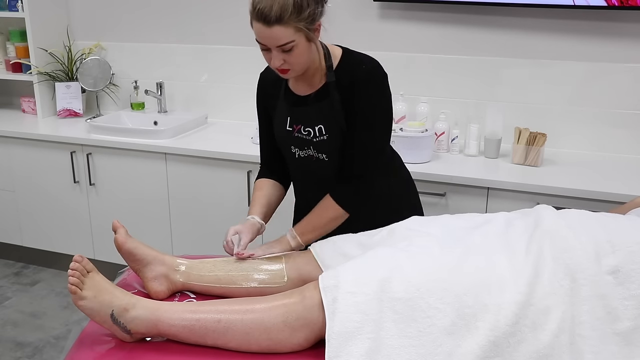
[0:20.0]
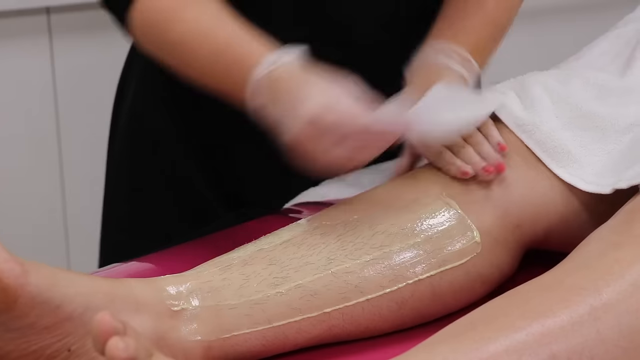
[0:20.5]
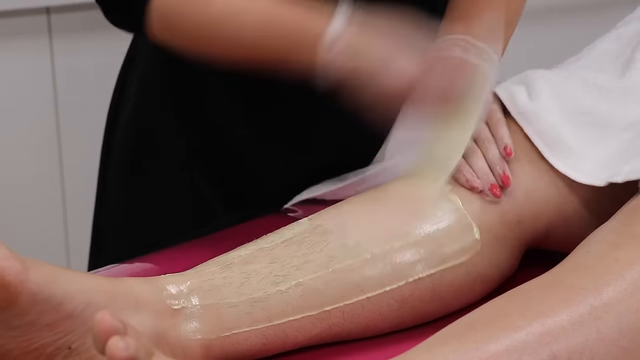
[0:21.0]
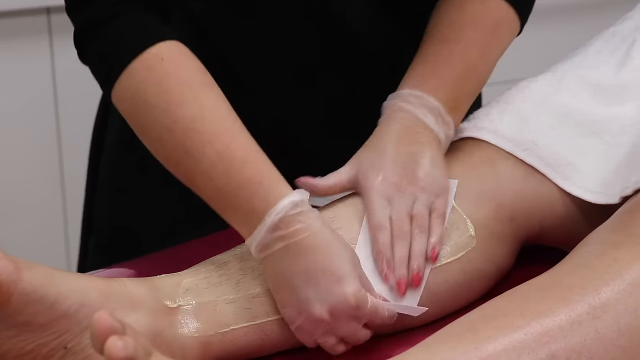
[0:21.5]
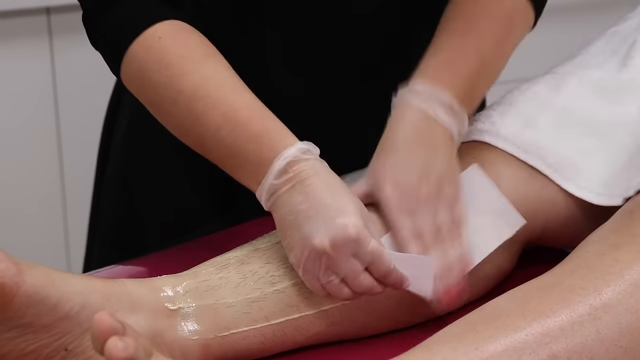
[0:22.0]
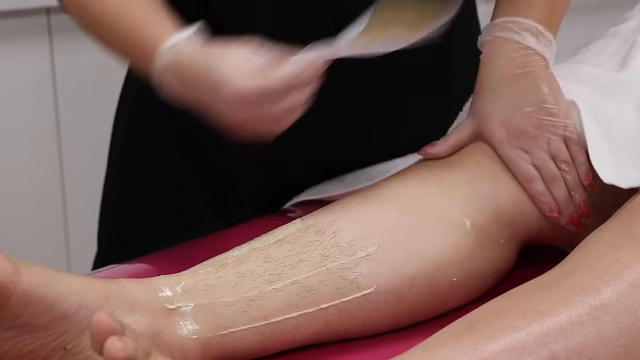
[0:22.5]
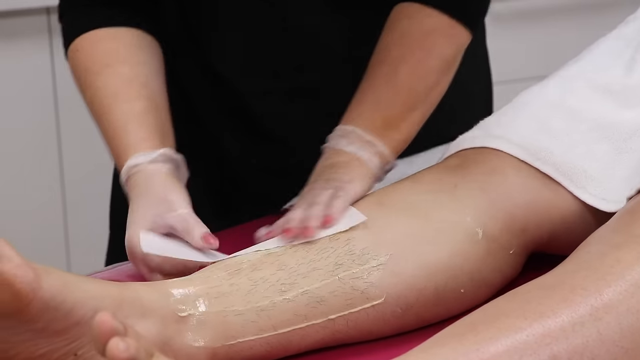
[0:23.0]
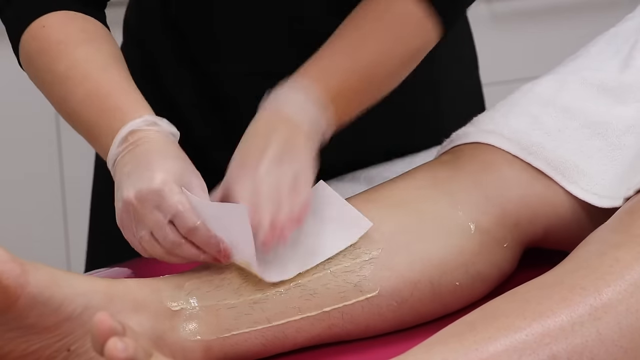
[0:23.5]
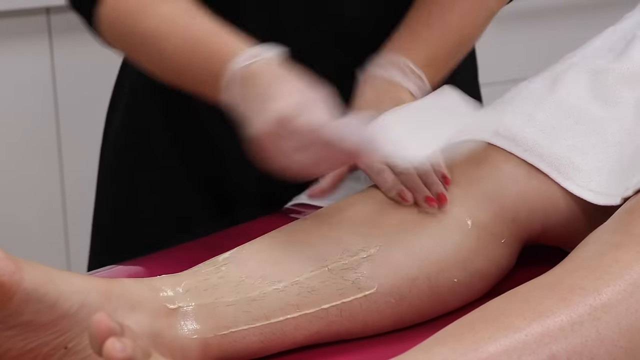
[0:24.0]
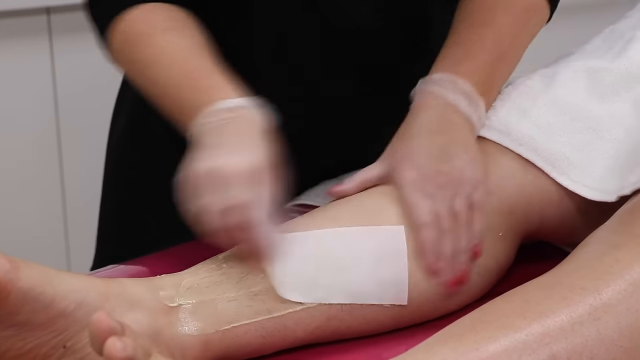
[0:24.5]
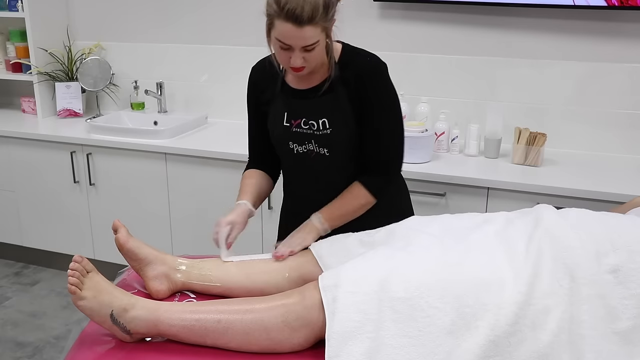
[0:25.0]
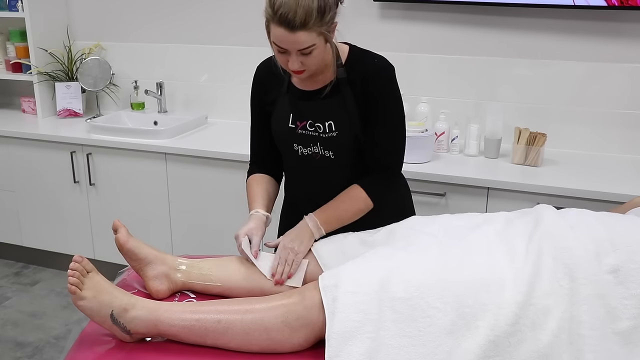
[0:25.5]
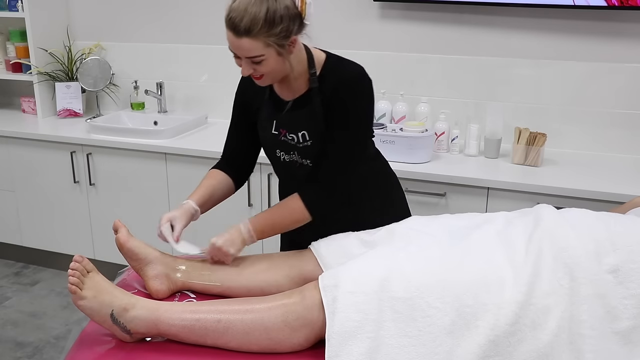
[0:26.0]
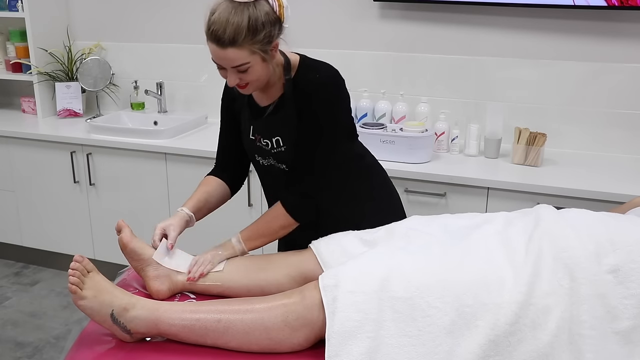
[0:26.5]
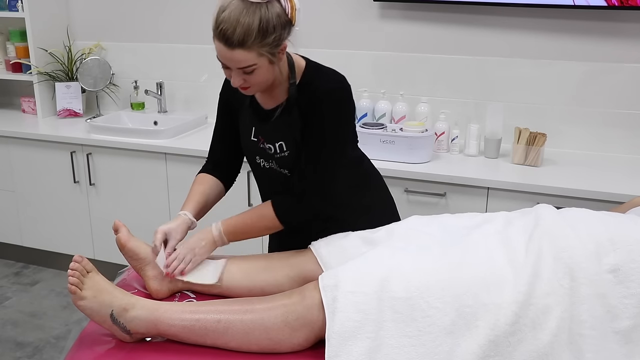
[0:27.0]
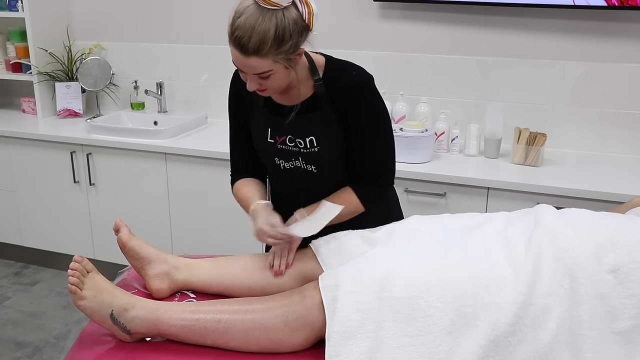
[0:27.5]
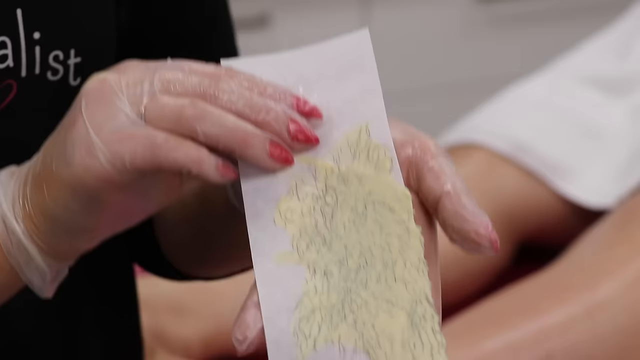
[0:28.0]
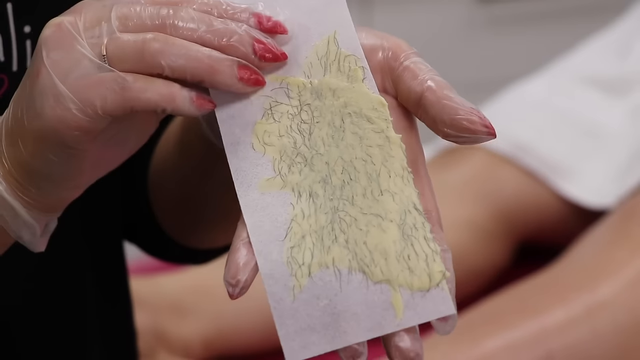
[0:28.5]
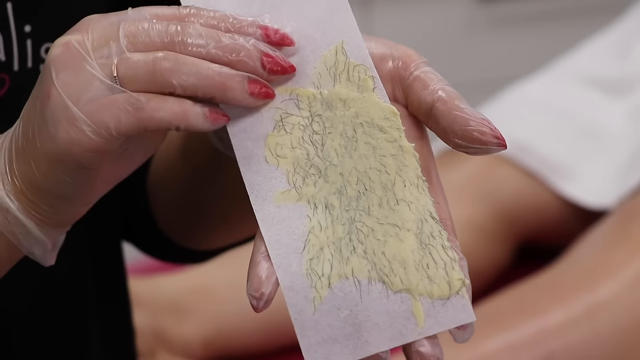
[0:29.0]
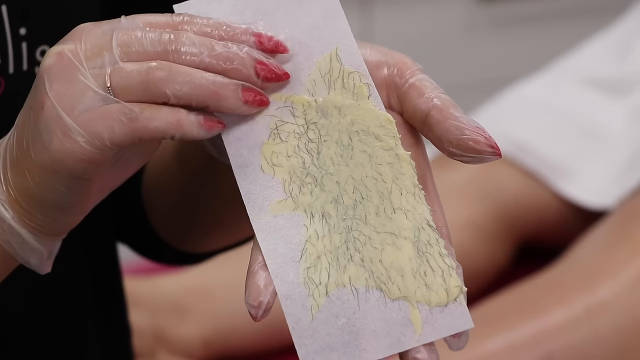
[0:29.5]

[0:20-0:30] A specialist is waxing the person's legs with tape and wax. She has dyed blonde-silver hair, wears lipstick, and has well-groomed eyebrows. She removes the strip and shows the leg hair stuck on the tape along with the wax. Licon products are behind her, along with more wooden popsicle sticks. She is dressed in black, with a Licon apron and an all-black costume or outfit.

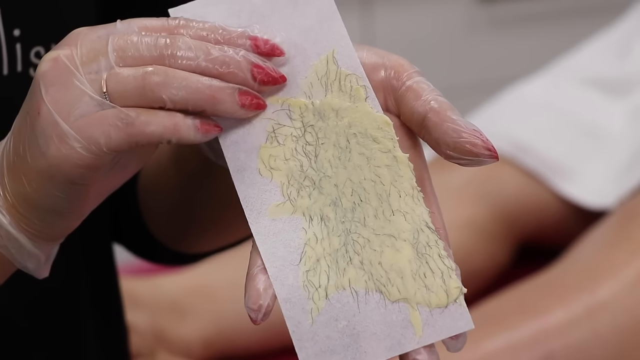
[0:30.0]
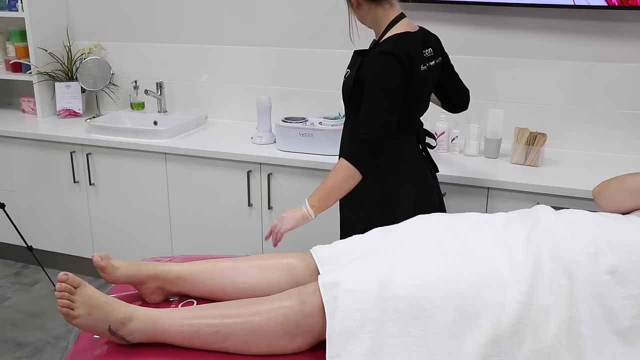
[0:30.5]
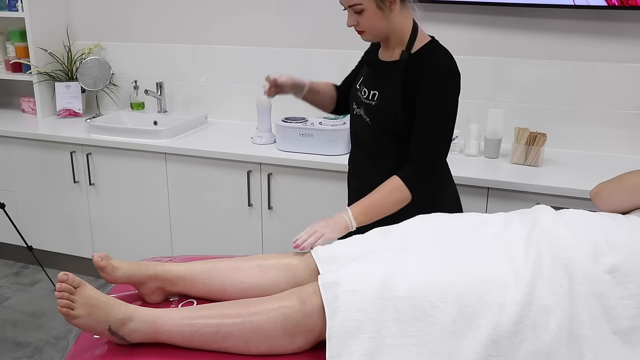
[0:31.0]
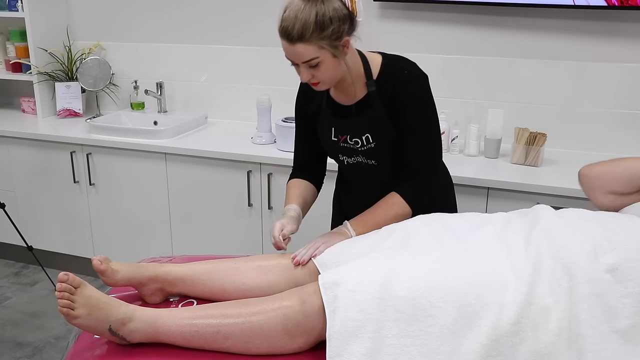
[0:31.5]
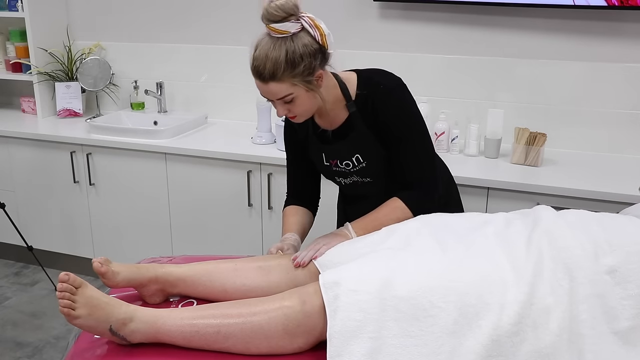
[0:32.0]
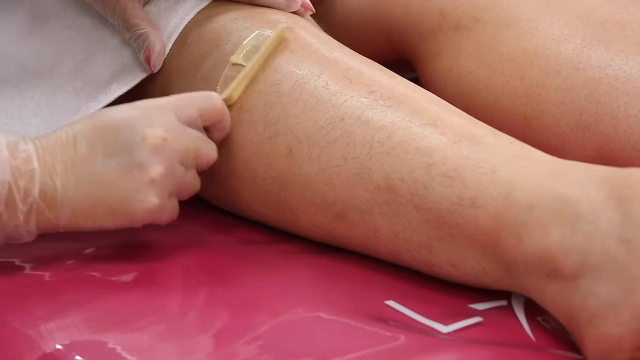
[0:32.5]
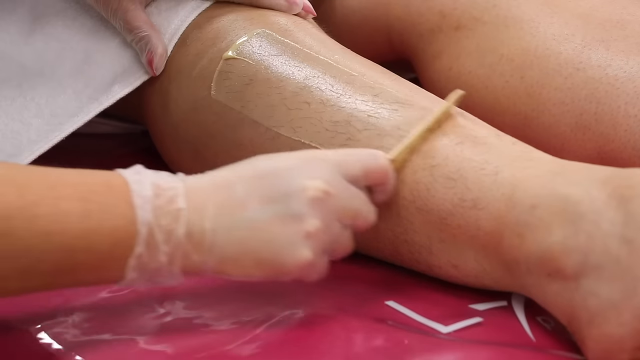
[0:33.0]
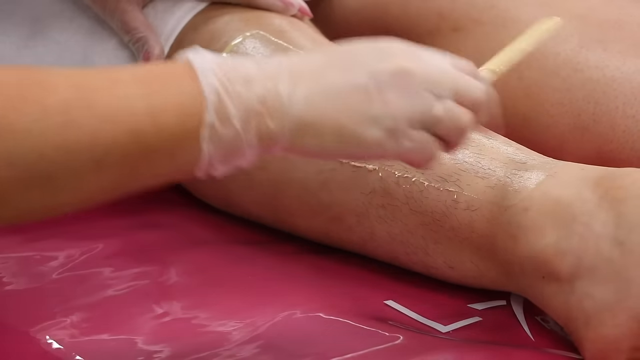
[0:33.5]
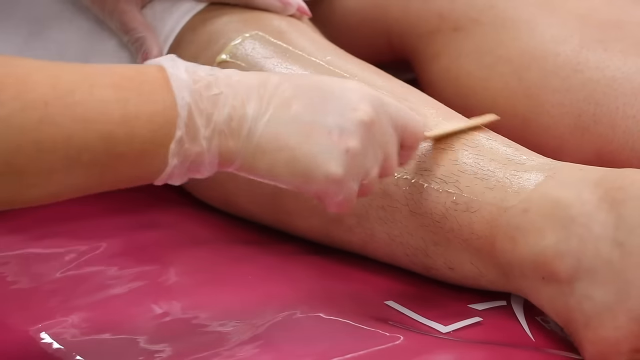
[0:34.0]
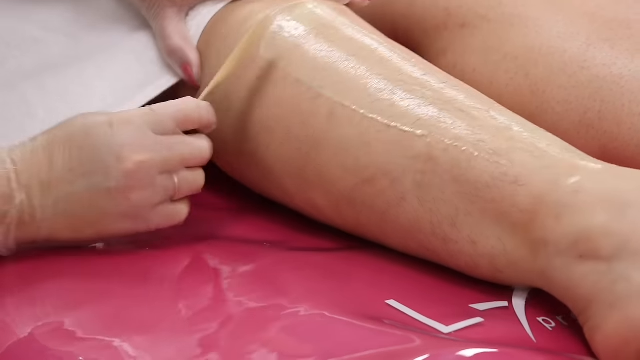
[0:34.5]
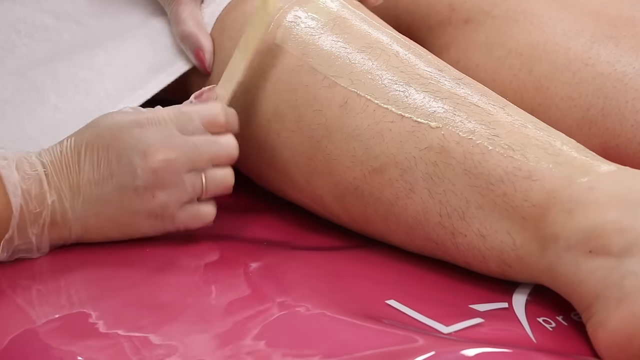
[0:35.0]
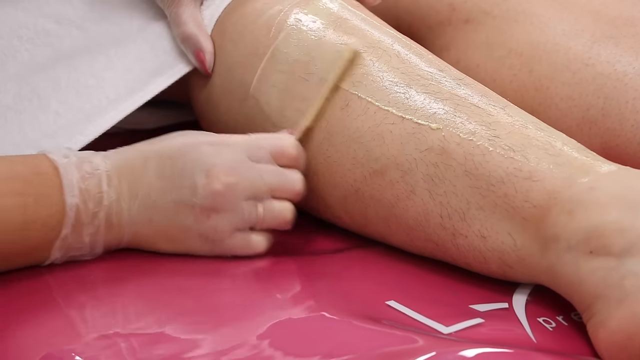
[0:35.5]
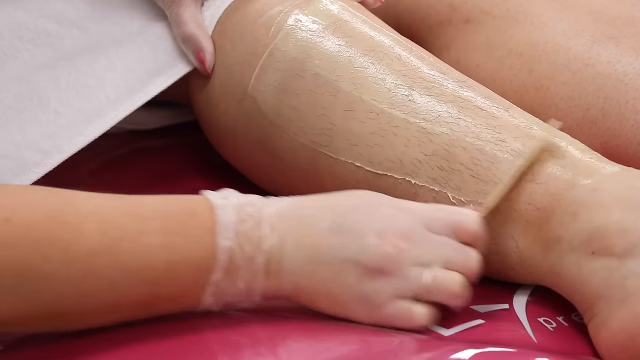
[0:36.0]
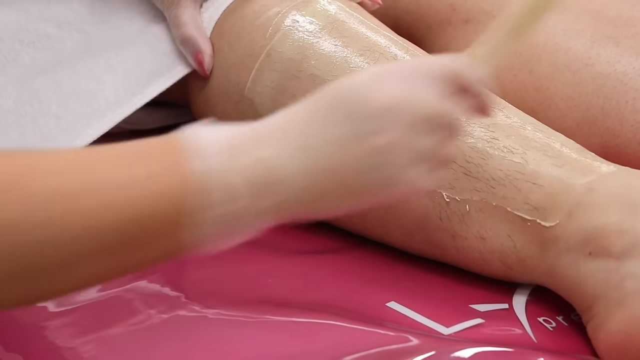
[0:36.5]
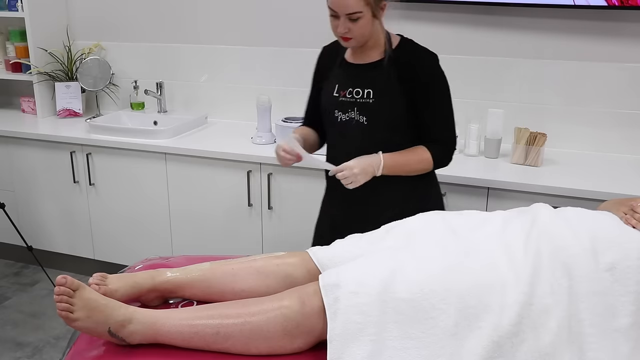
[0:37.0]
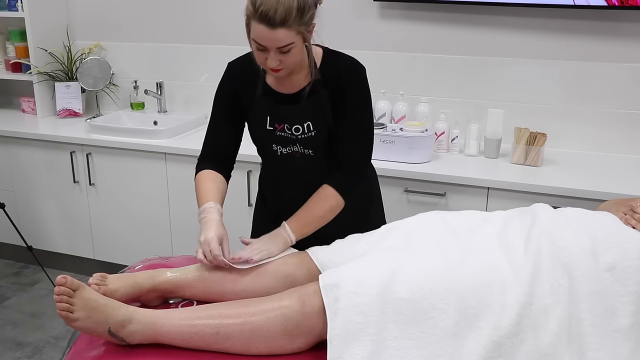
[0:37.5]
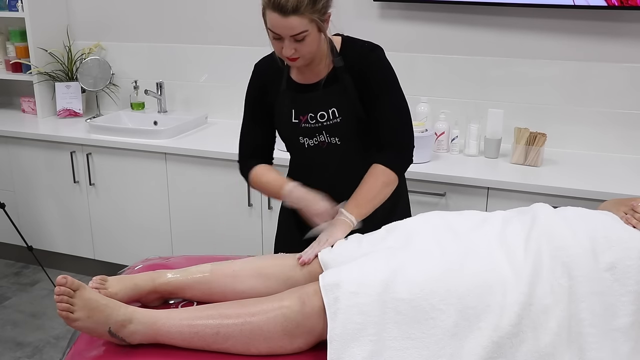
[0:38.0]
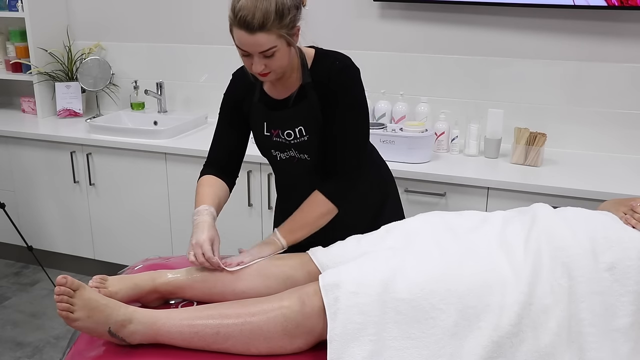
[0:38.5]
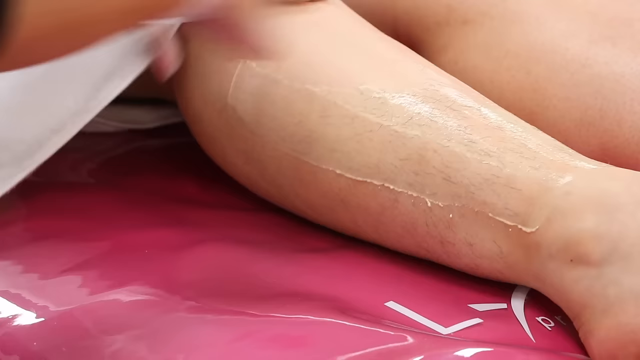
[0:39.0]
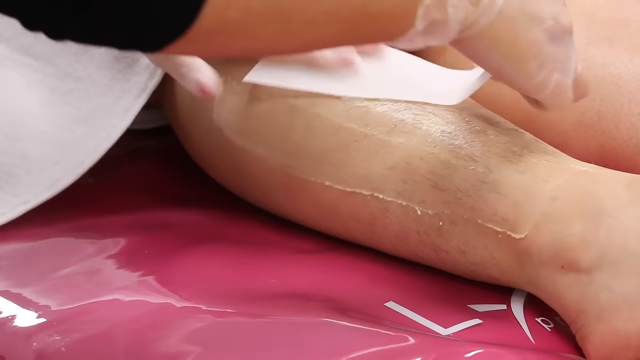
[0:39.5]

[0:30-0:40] A lot of hair is stuck on the wax, and the woman shows it before moving on to remove more from the calves, still working on the right calf. The masseuse wears gloves and a ring on her right hand. She throws away a piece of paper and applies more wax onto the leg to remove more hair, then removes hair from the side of the leg.